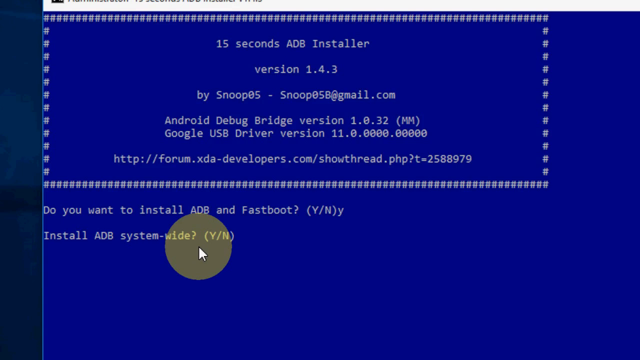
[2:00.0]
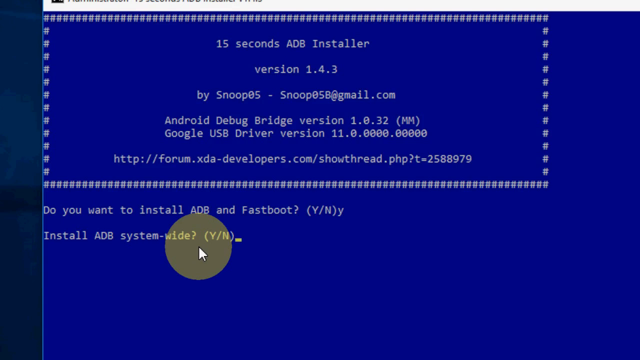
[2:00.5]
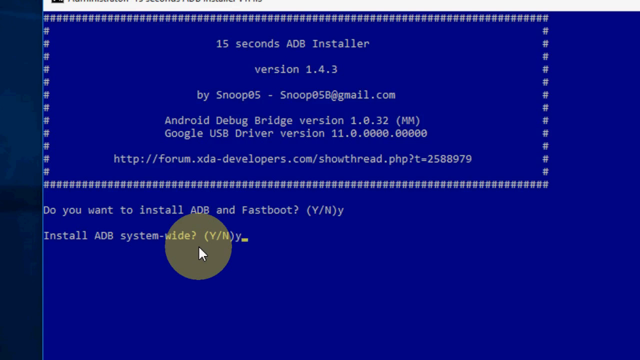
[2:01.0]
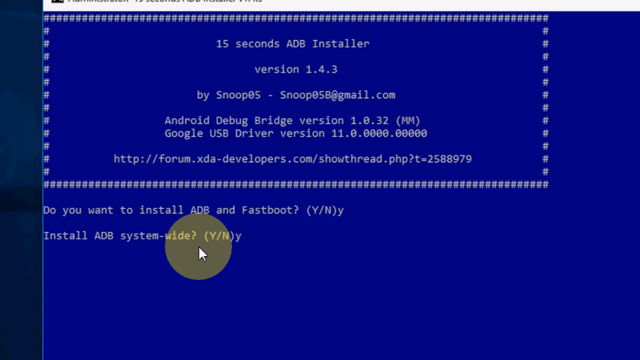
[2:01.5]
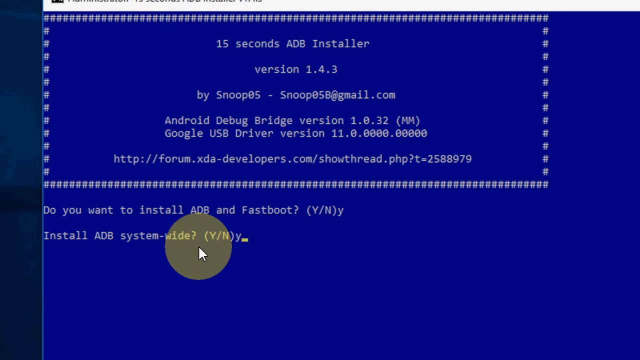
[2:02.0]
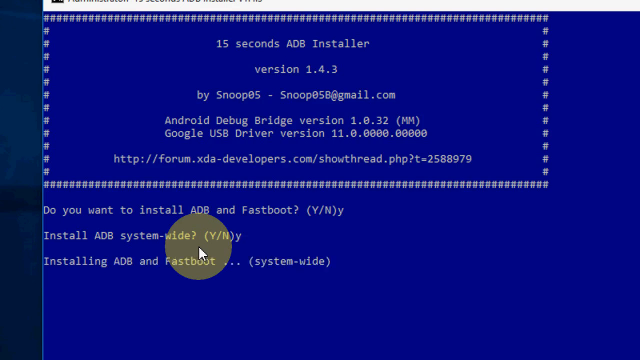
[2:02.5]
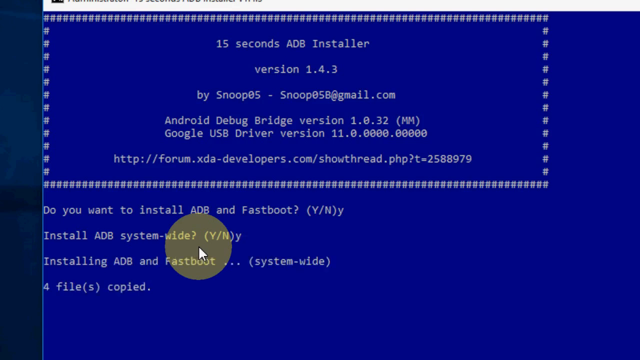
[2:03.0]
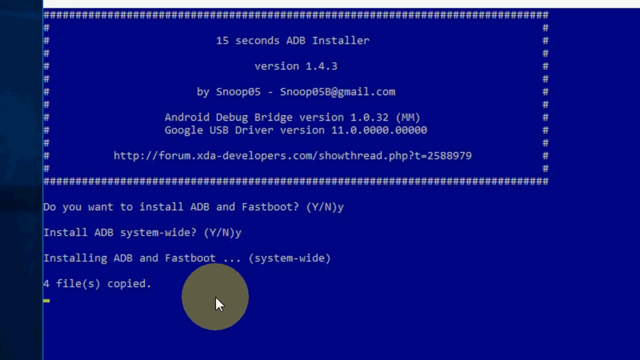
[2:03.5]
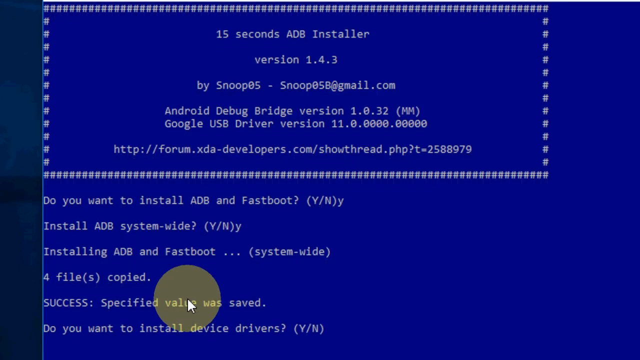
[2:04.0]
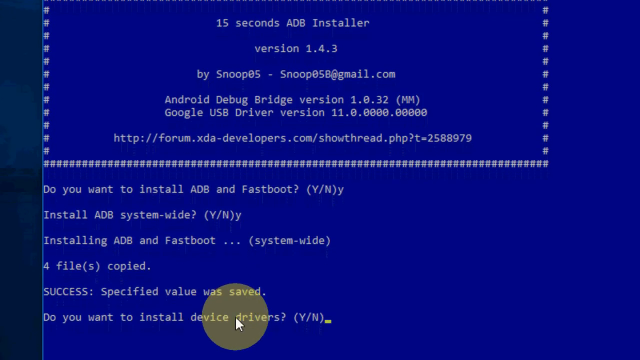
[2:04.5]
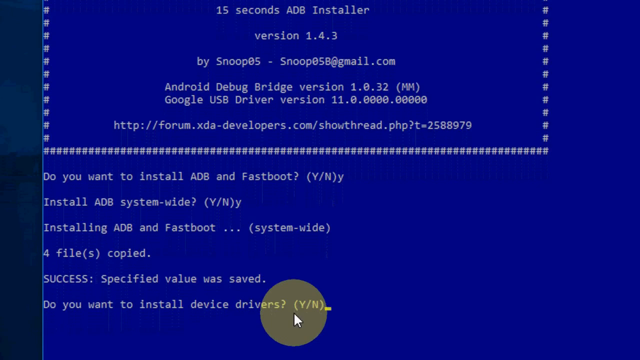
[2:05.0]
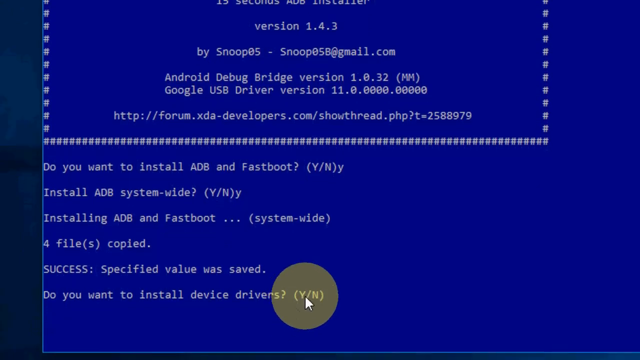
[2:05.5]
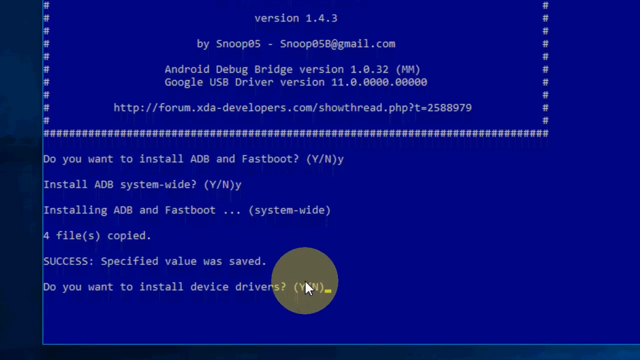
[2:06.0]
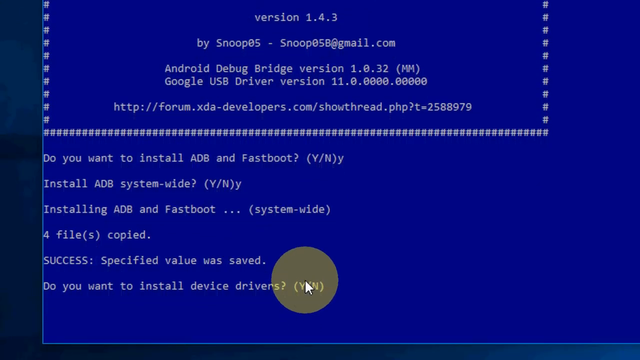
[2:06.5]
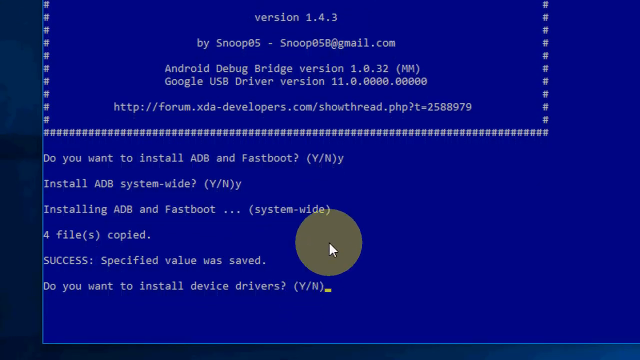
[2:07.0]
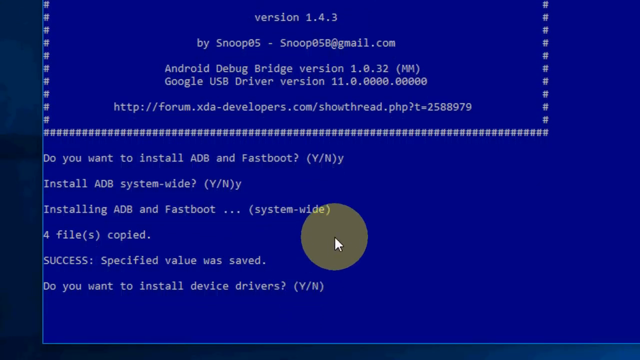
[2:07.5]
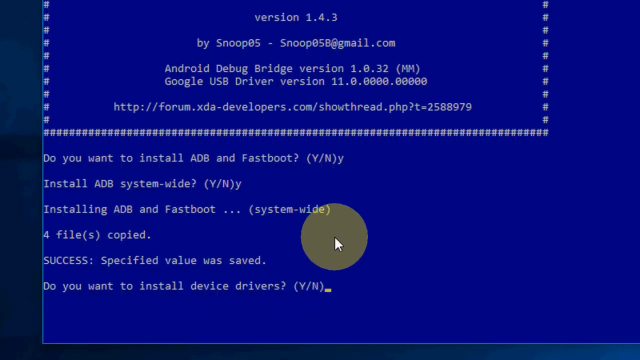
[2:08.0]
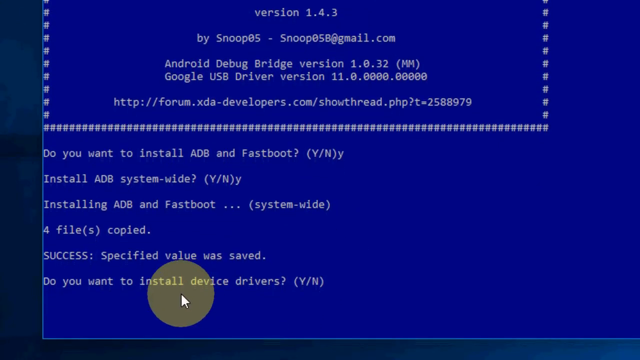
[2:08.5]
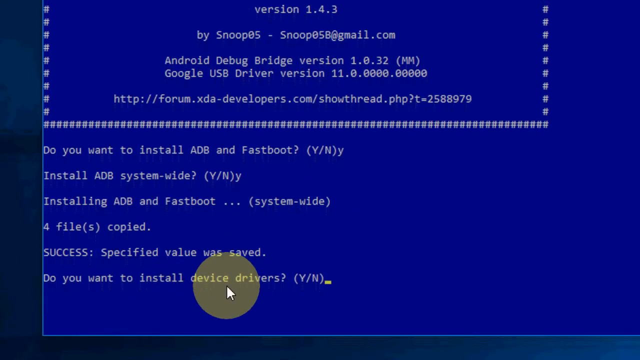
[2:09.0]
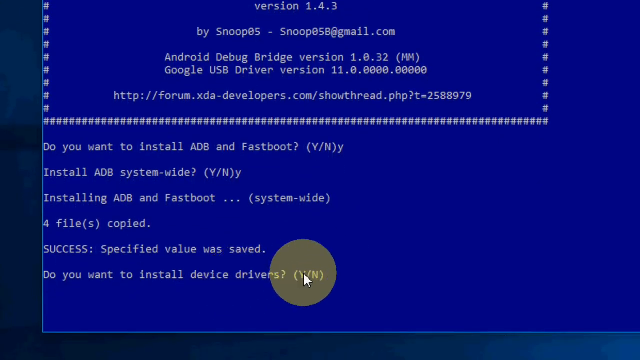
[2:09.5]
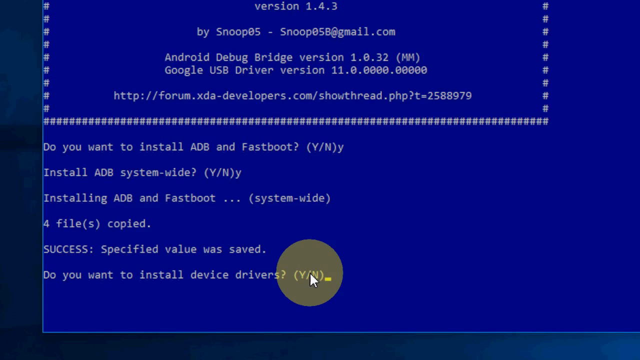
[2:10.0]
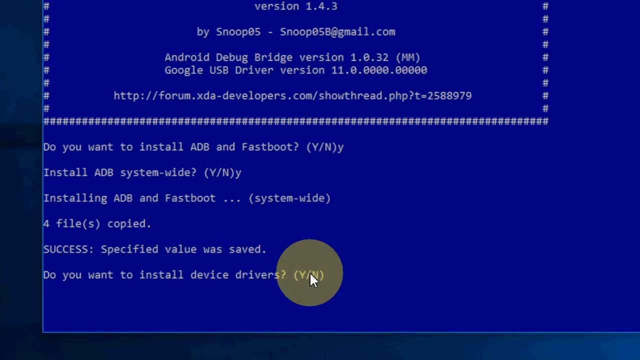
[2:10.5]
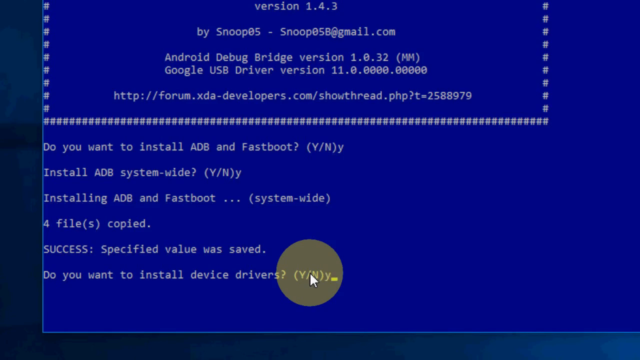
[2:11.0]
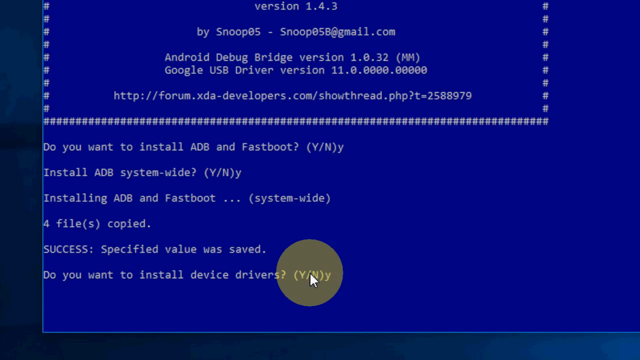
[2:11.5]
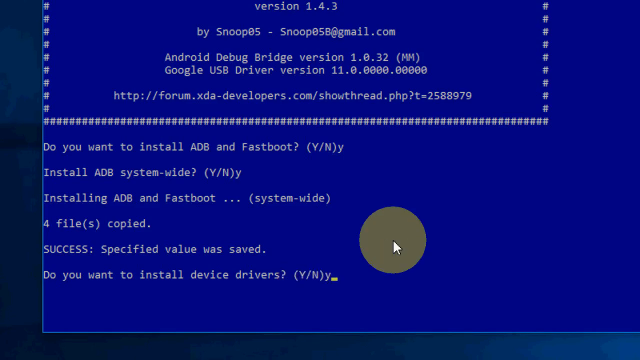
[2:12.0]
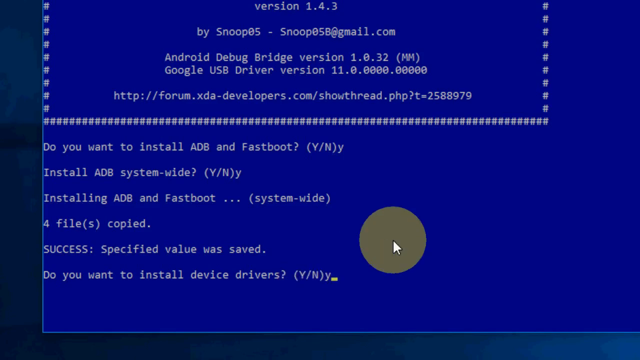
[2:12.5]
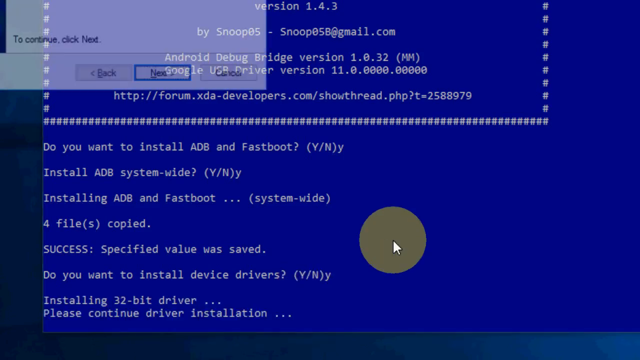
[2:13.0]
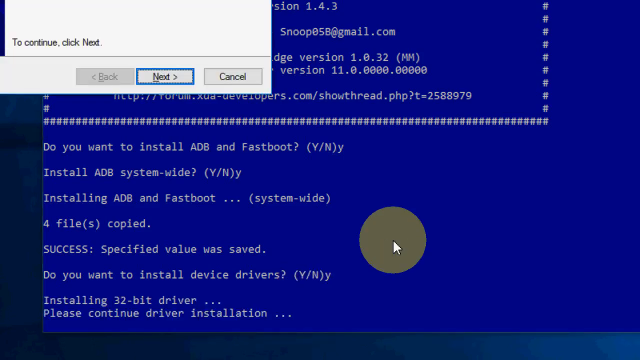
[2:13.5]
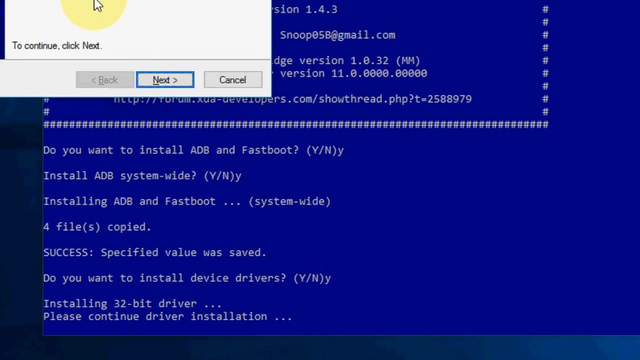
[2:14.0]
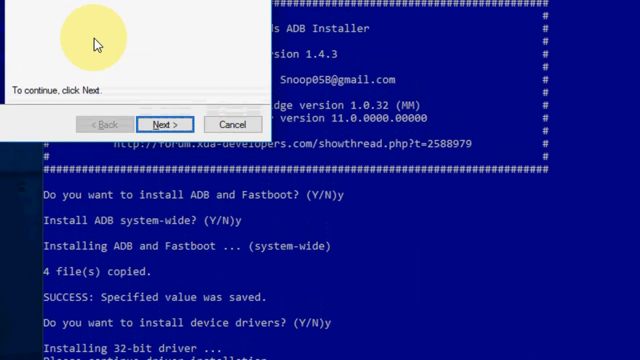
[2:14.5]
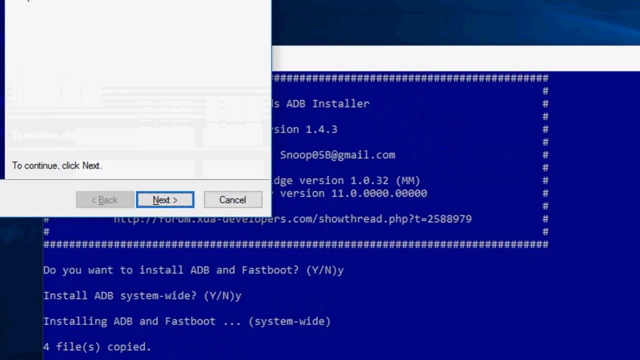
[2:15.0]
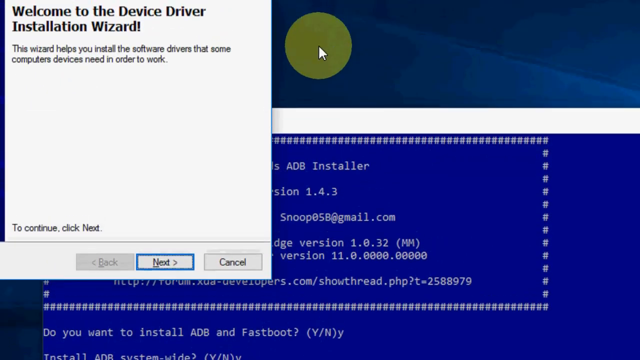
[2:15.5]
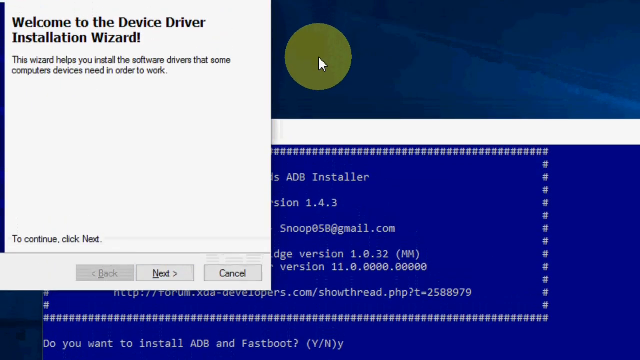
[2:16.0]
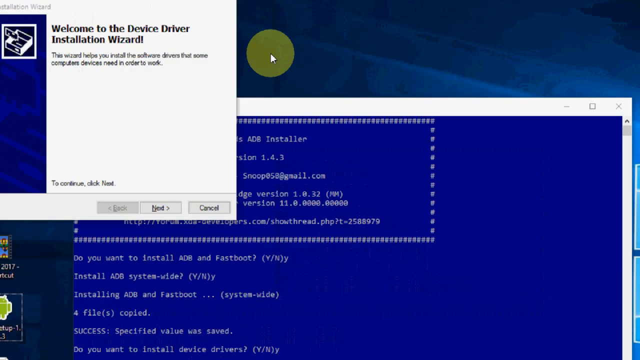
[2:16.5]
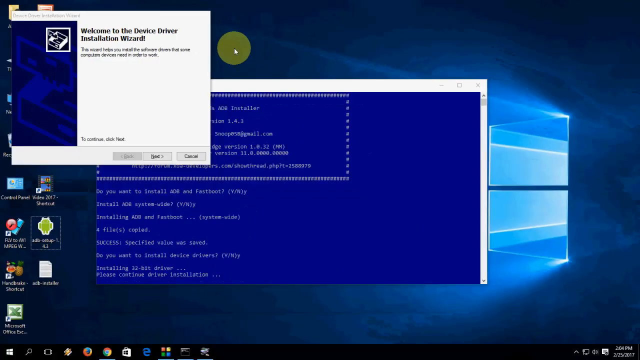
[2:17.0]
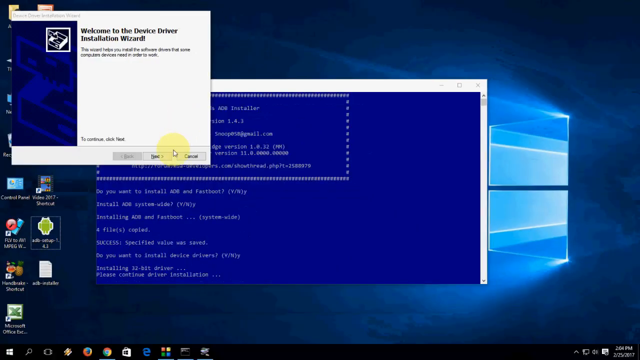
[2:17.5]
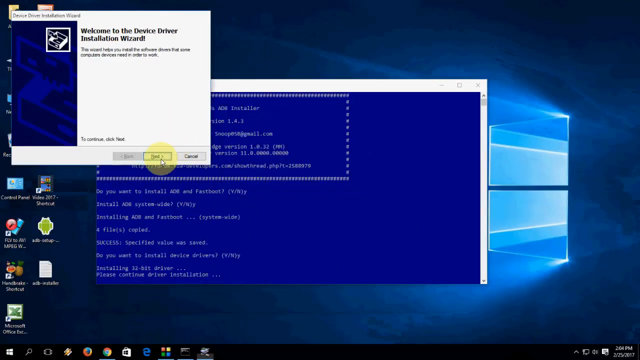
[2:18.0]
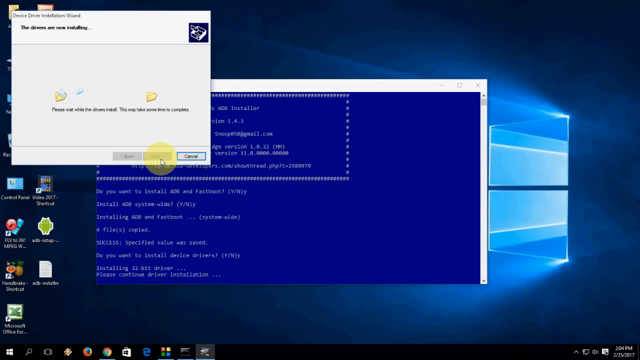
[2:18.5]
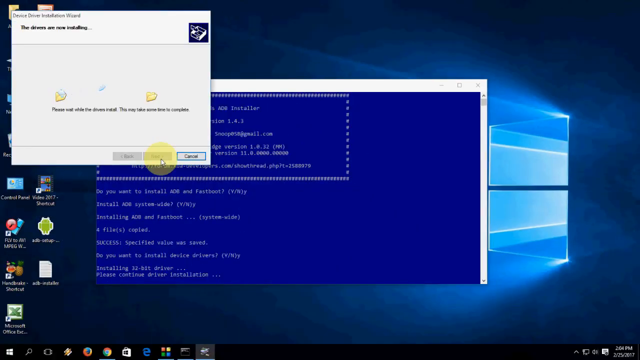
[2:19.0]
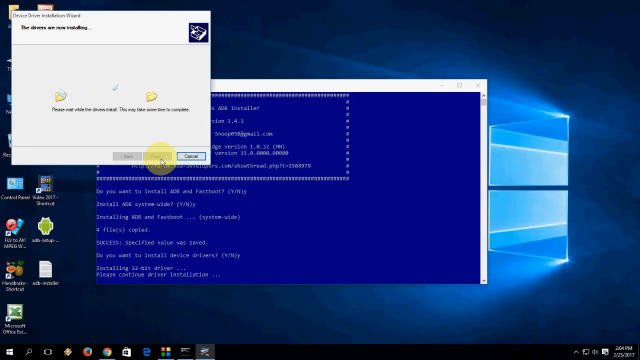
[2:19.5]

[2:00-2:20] After the person selects yes, the installation actions appear on the screen in white text: lines stating that the software is being installed and that files have been copied onto the system, followed below by a confirmation line showing success. Another option then asks whether to install device drivers, and the person enters Y. A standard white file installation window pops up showing the Installation Wizard with confirm or cancel buttons. Two folder icons appear side by side with an animation of files moving from one folder to the other, and then the window closes.